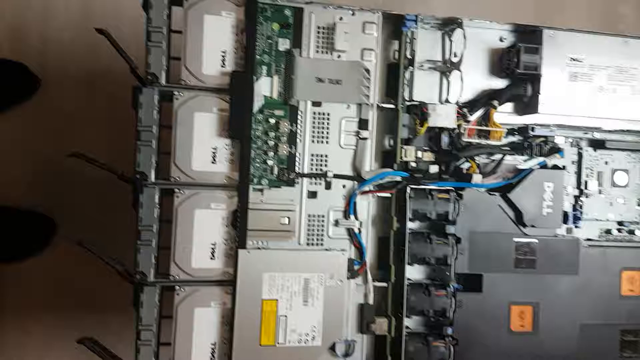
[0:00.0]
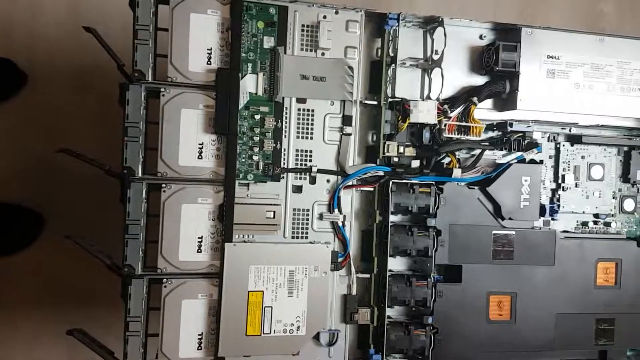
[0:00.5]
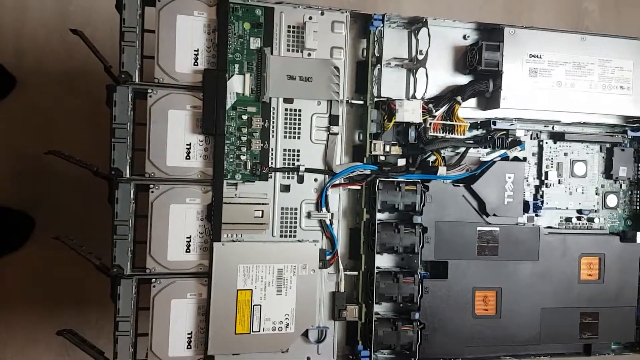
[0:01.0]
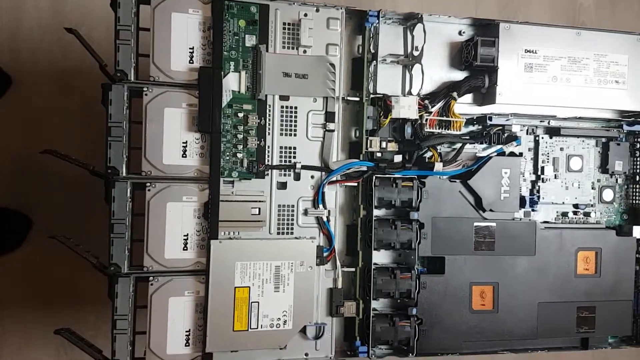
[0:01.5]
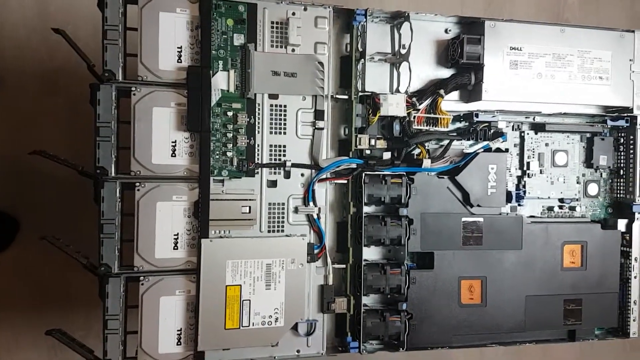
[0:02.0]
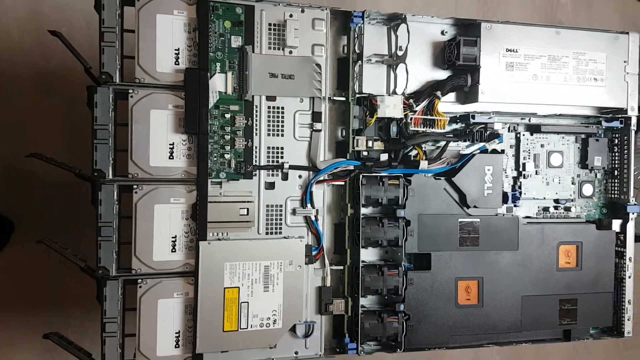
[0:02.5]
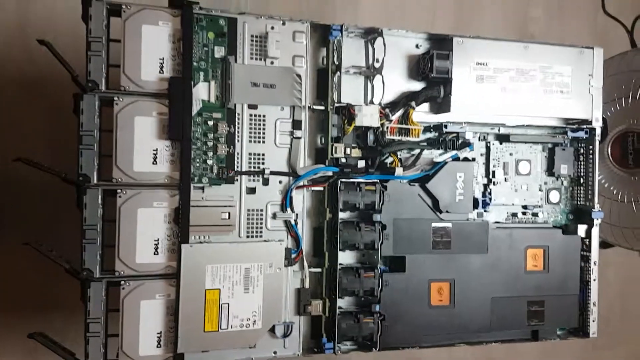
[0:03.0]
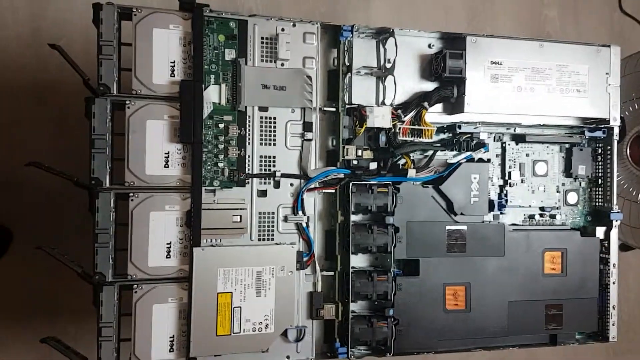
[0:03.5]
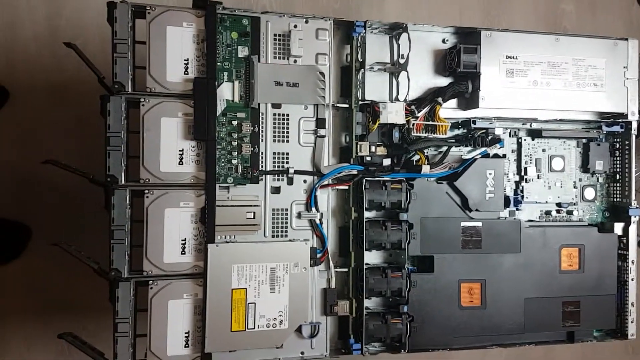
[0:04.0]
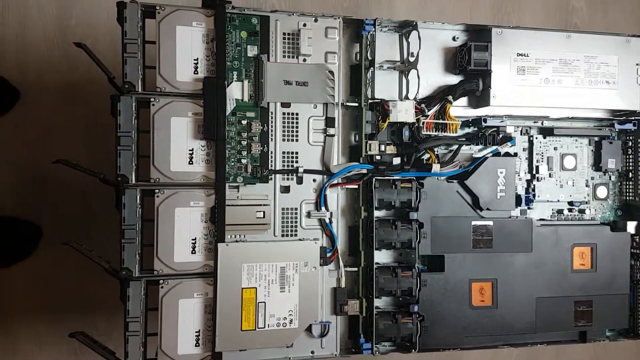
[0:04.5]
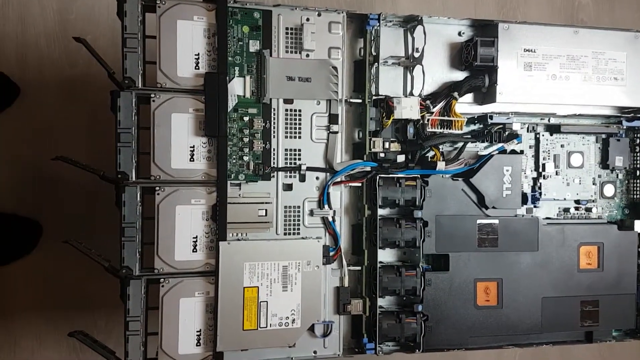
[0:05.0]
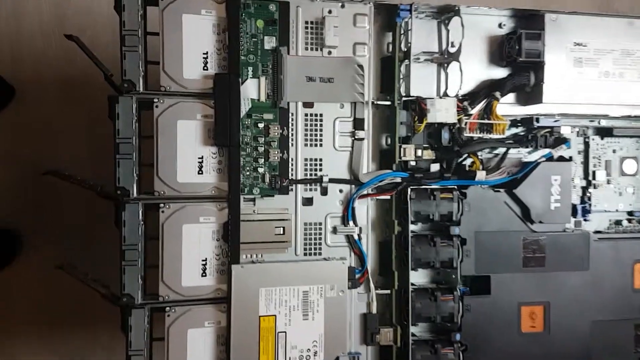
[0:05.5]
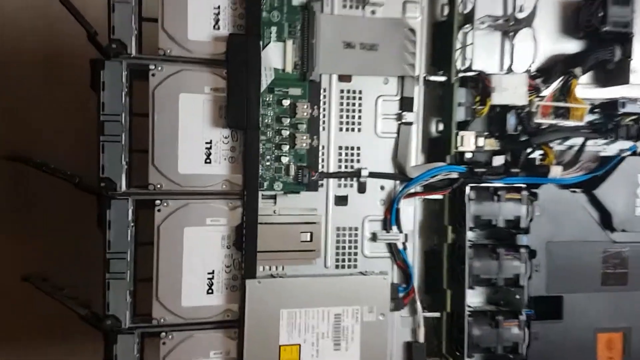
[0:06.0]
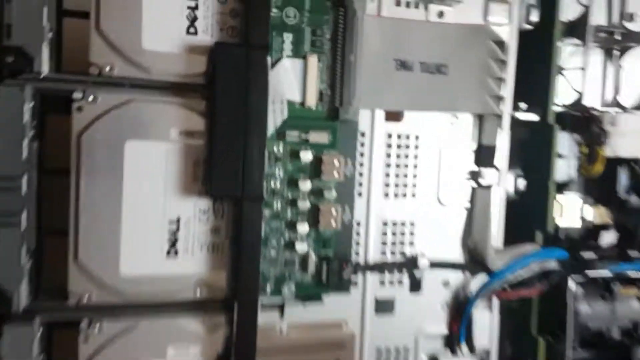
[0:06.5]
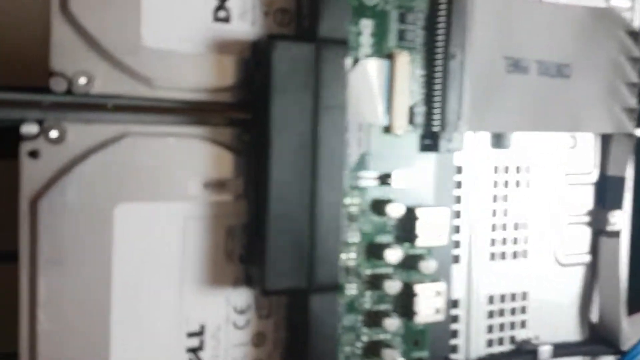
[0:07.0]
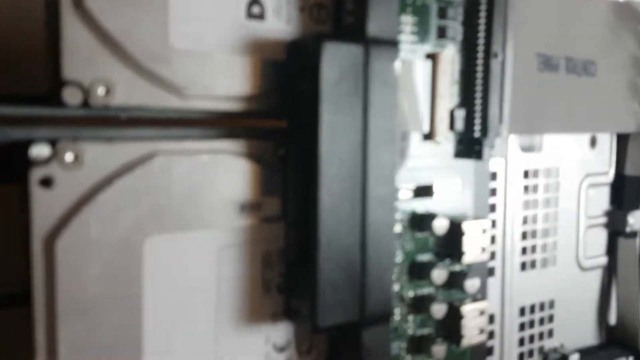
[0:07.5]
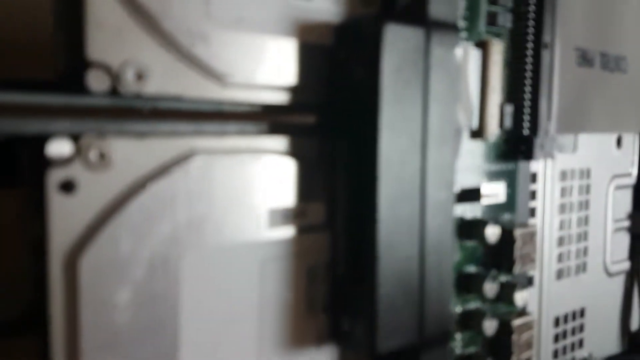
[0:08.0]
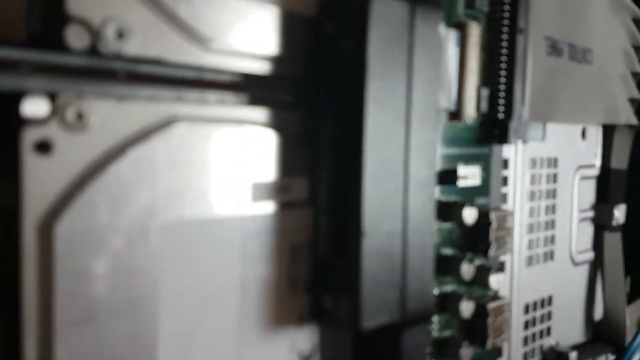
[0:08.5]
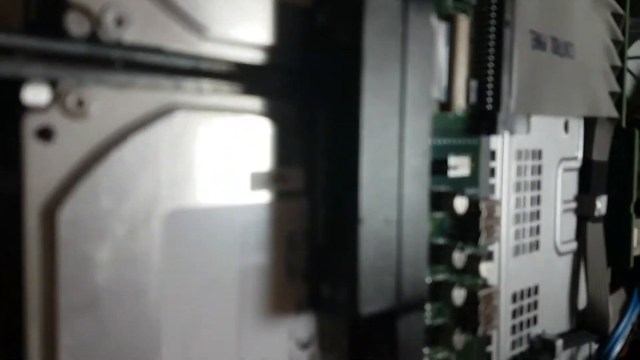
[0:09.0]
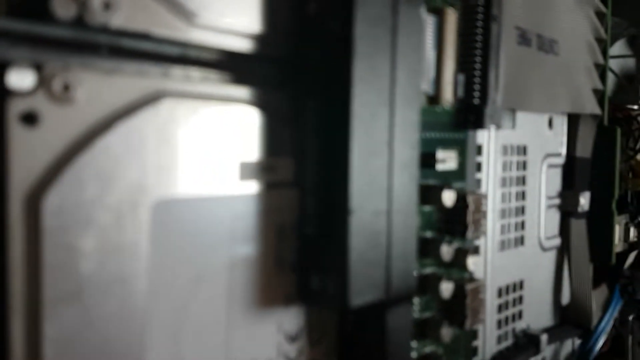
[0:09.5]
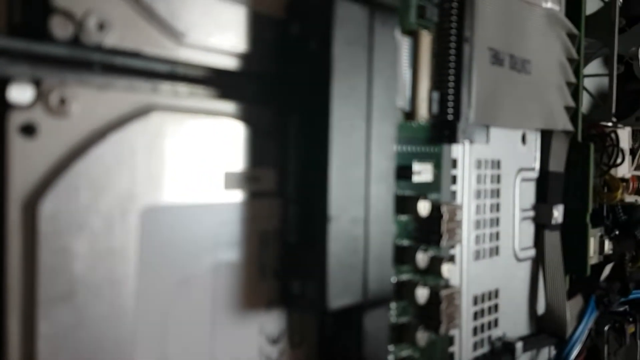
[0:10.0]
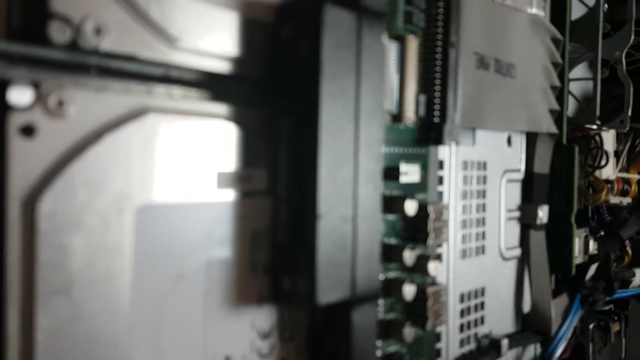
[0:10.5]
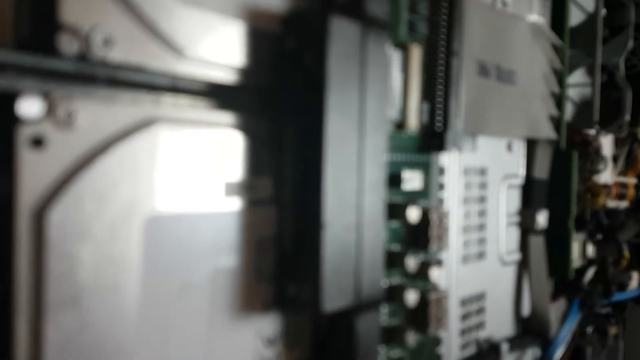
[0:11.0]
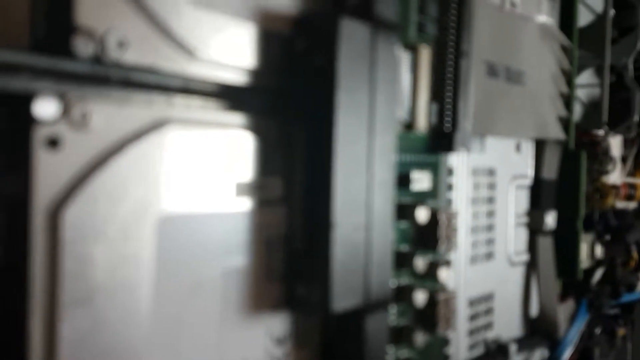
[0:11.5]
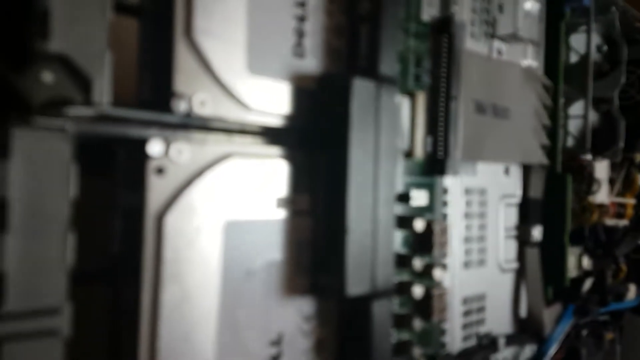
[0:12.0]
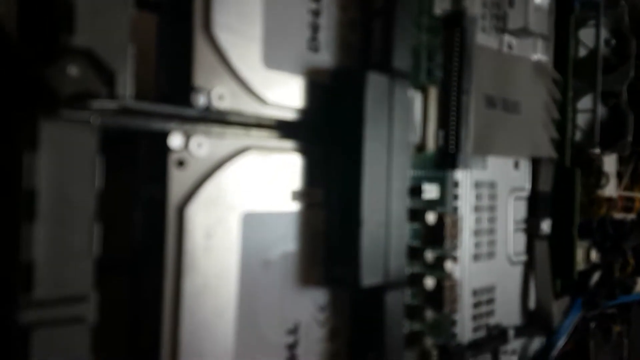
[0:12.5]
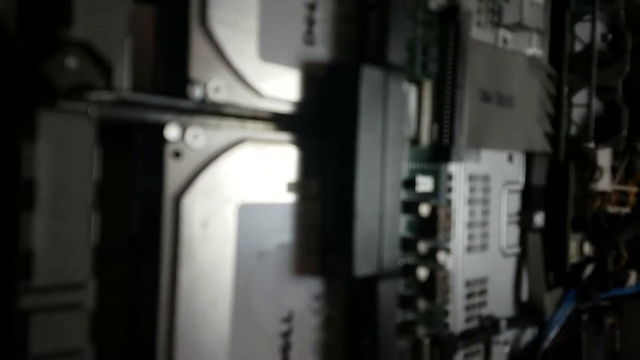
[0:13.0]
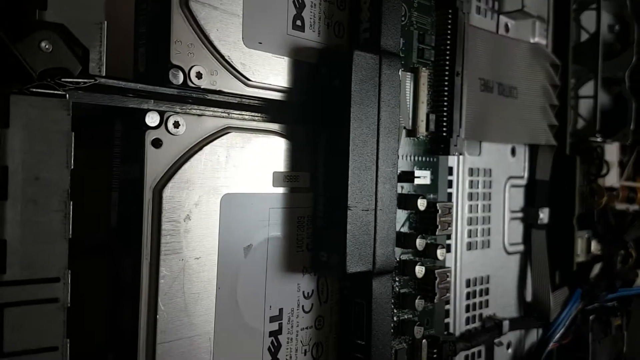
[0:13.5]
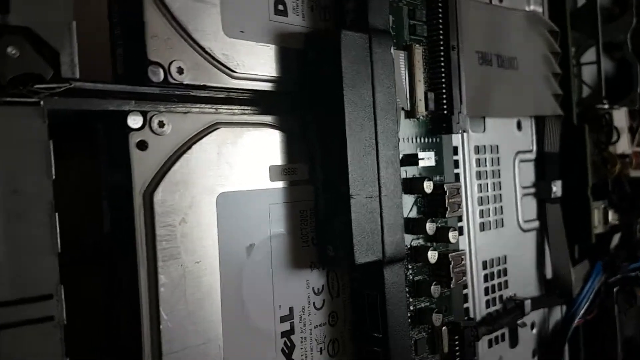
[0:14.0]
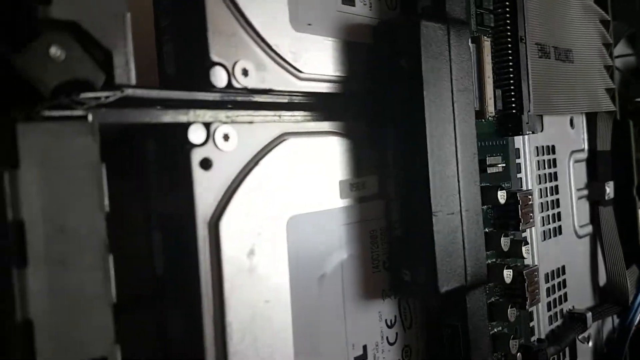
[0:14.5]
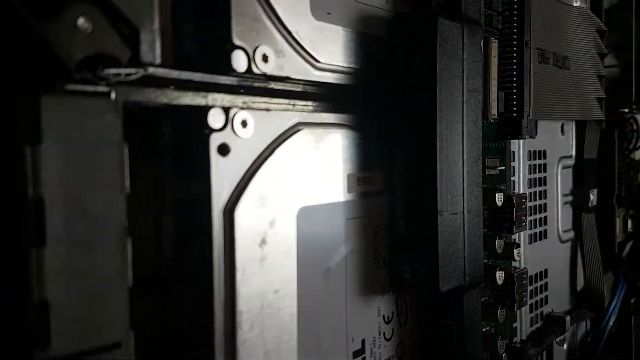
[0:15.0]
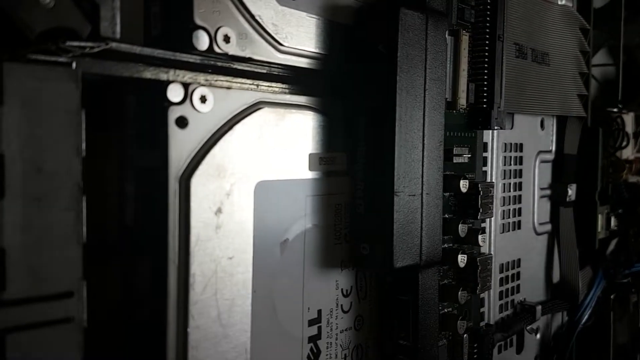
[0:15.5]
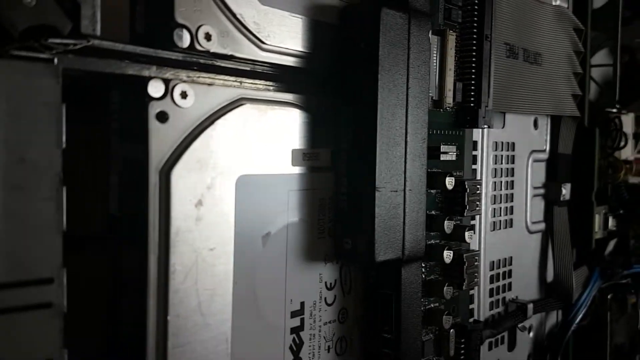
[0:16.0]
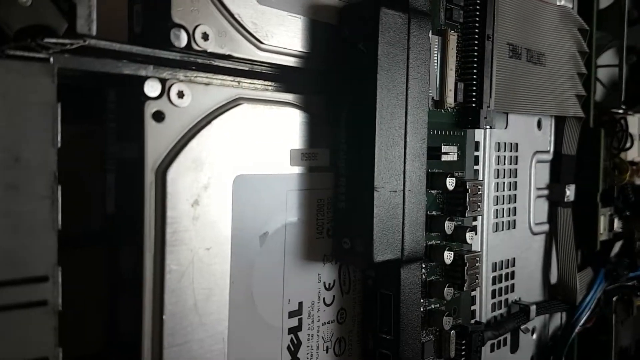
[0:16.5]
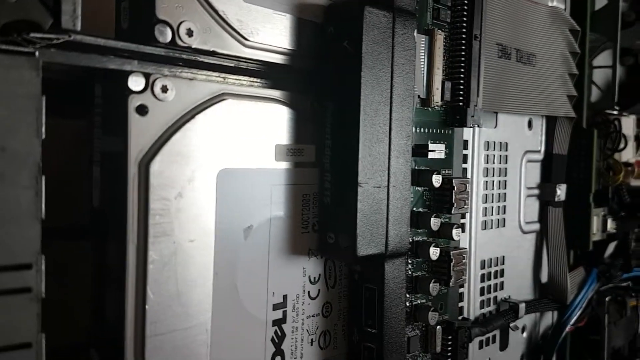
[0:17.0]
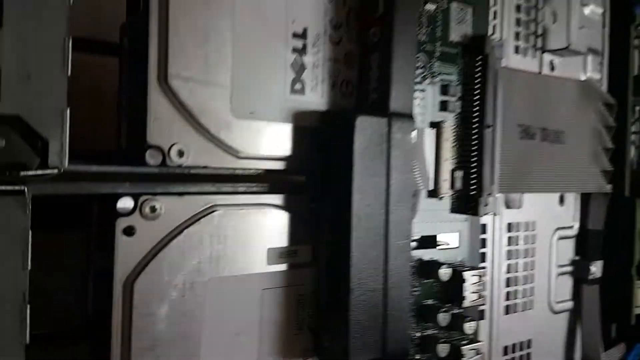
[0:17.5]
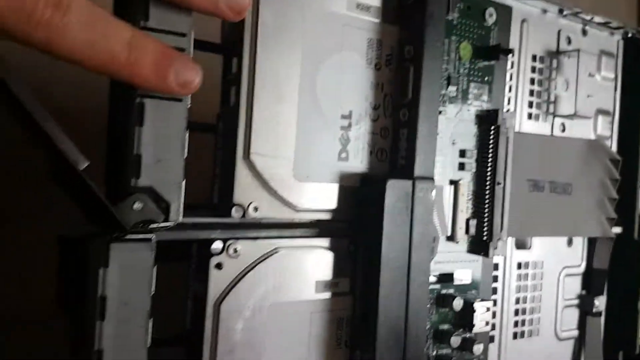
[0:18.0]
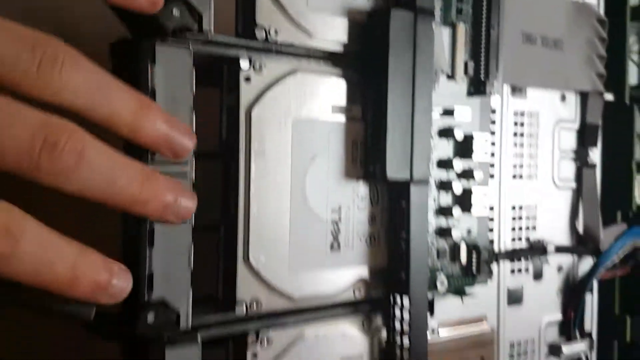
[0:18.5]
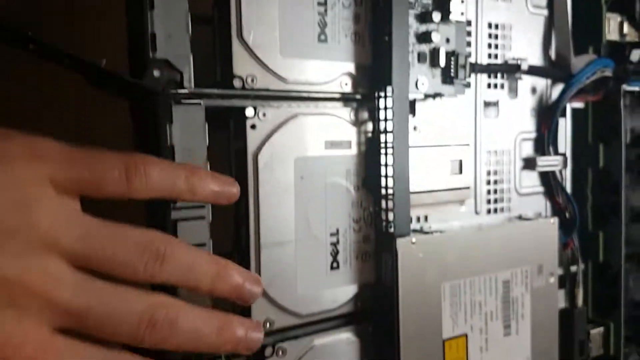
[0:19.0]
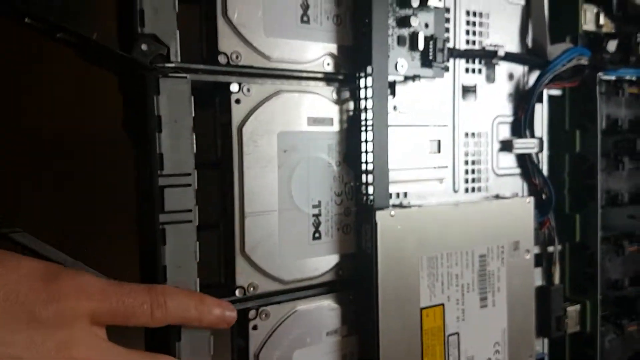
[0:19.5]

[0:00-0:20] A person appears to be showing a computer or server without its case on, and their feet are noticeable under the device. Inside are metal parts and components bearing the Dell logo, such as hard drives and circuit boards, along with some blue cables that appear to link the various components together. On the left there seem to be about four different hard drives, each branded Dell. On the right there appears to be some sort of fan or power supply, and a thick black cable appears to enter a PSU. The overall colour is very silver, and there are also some black plastic parts that could be a fan. The object is probably a server; it is long but narrow, with a rectangular shape.